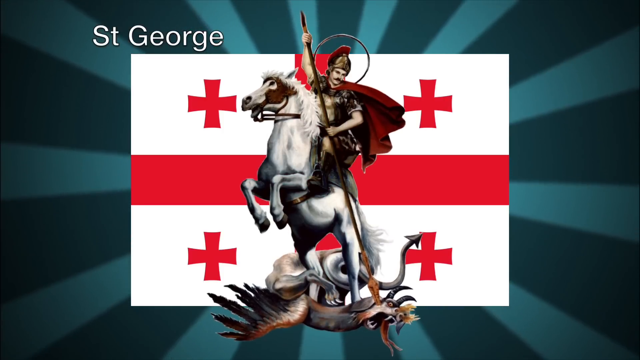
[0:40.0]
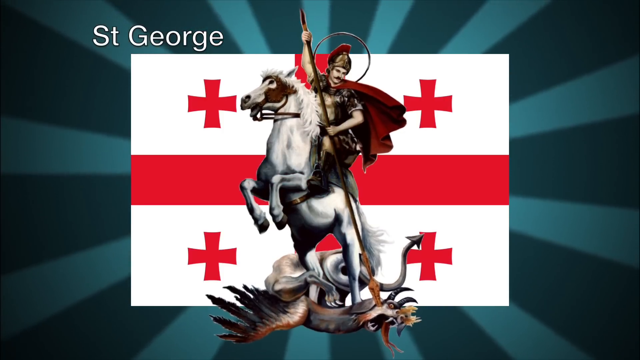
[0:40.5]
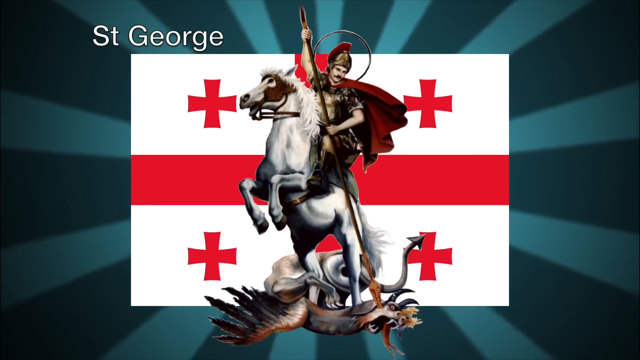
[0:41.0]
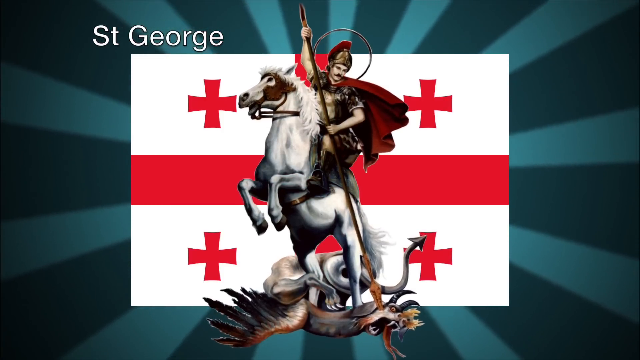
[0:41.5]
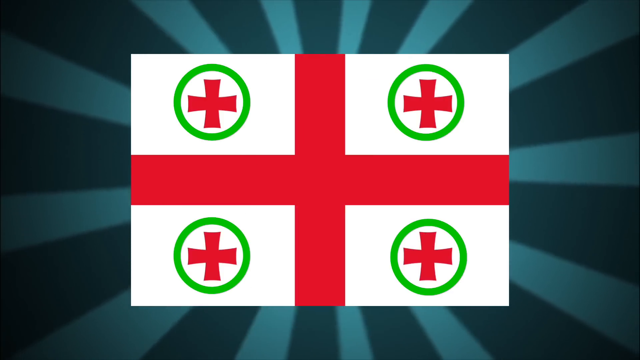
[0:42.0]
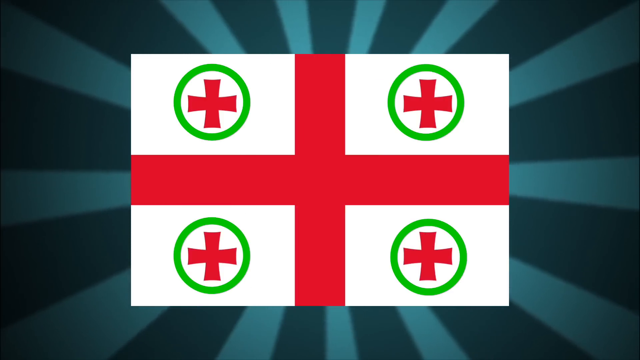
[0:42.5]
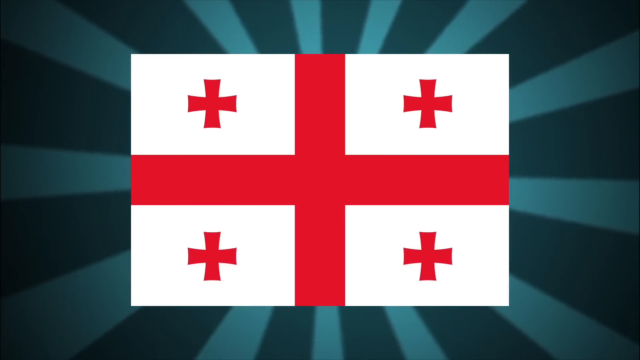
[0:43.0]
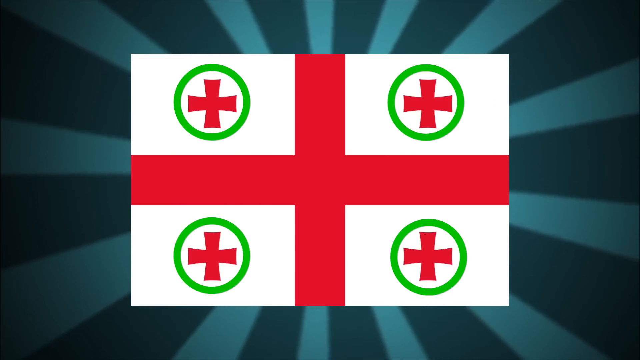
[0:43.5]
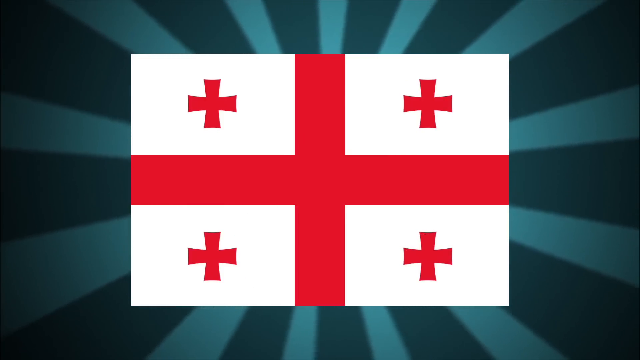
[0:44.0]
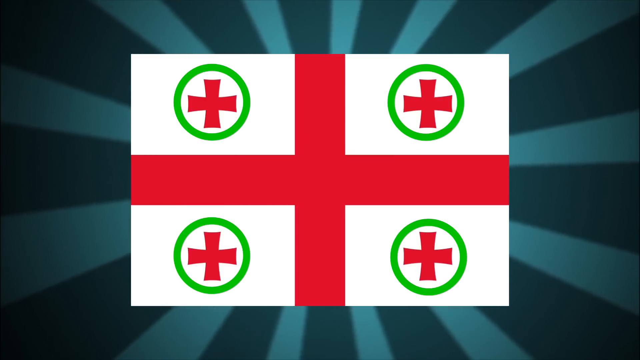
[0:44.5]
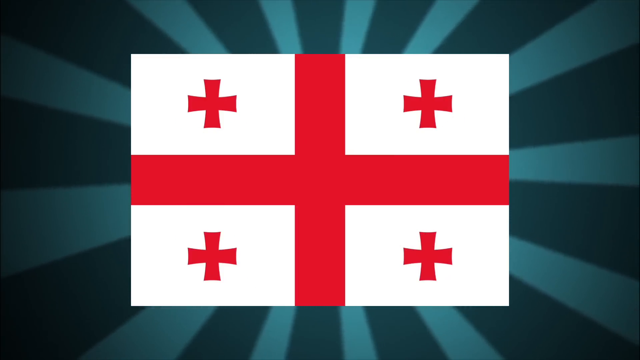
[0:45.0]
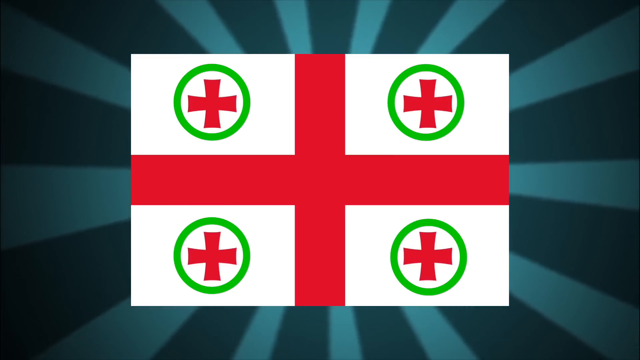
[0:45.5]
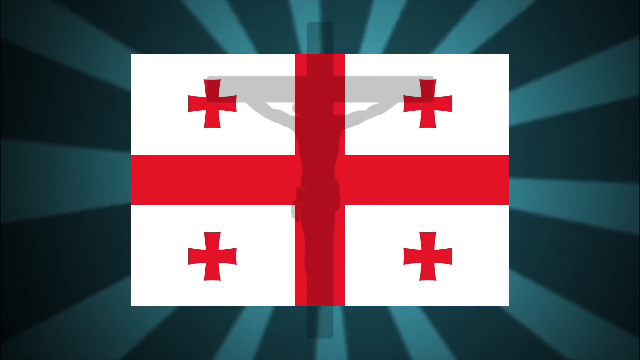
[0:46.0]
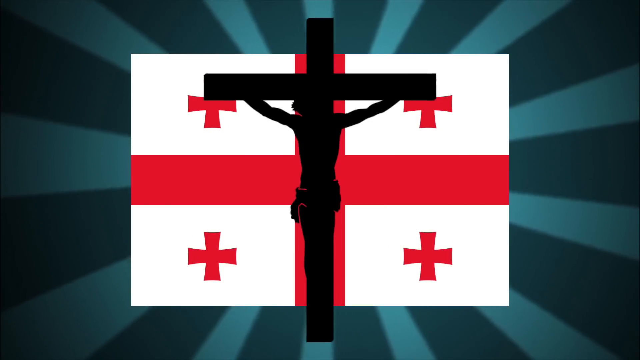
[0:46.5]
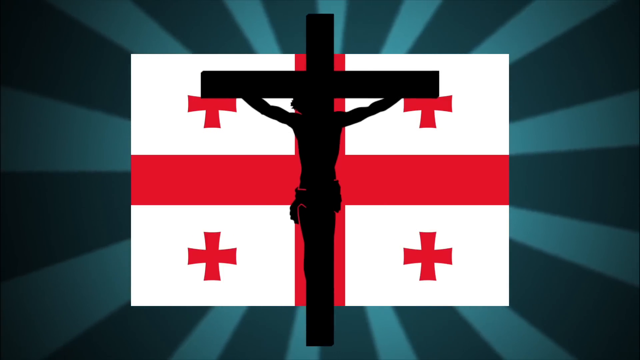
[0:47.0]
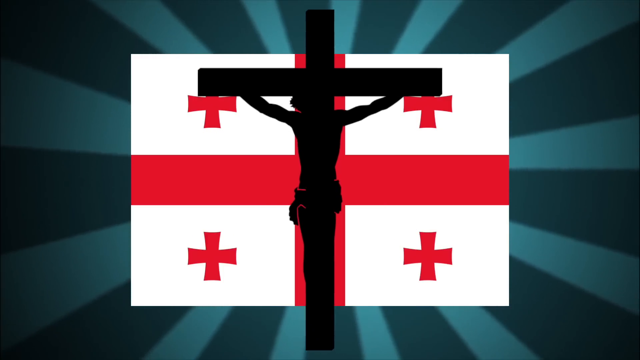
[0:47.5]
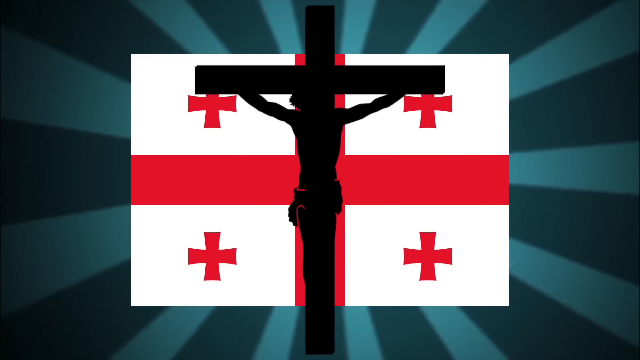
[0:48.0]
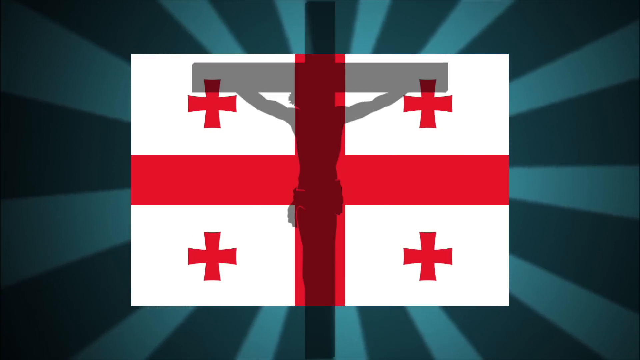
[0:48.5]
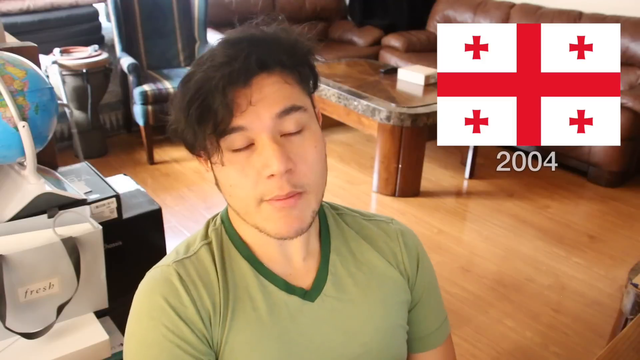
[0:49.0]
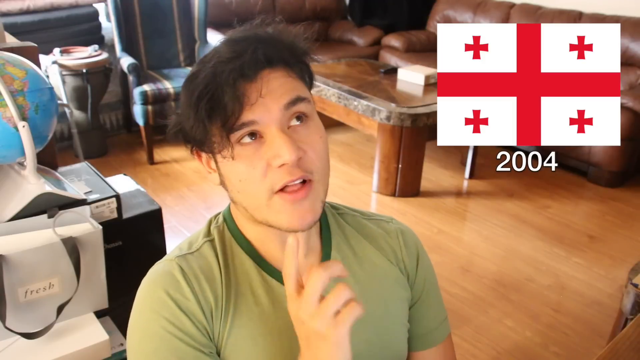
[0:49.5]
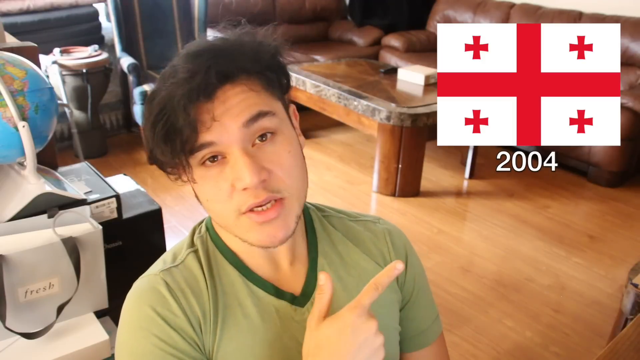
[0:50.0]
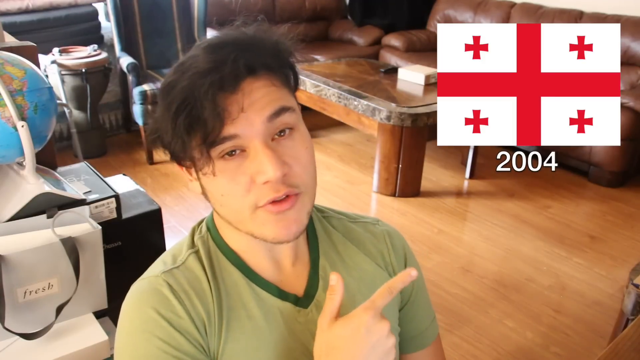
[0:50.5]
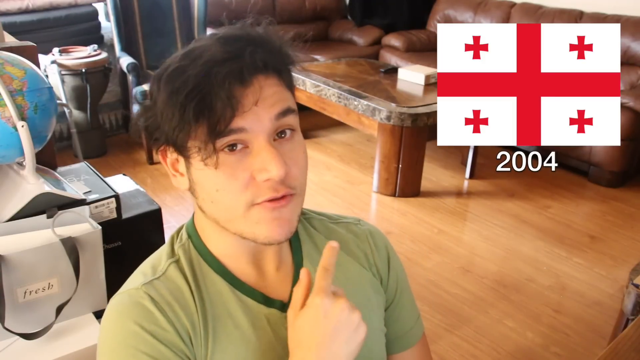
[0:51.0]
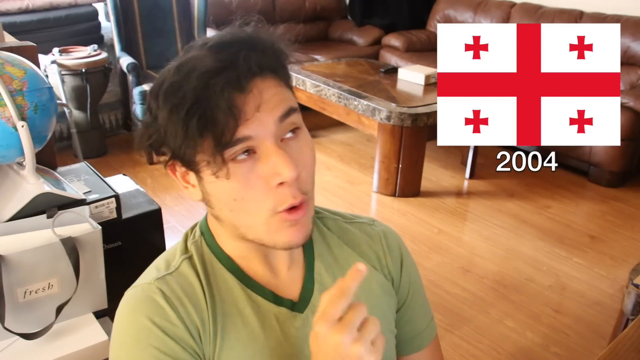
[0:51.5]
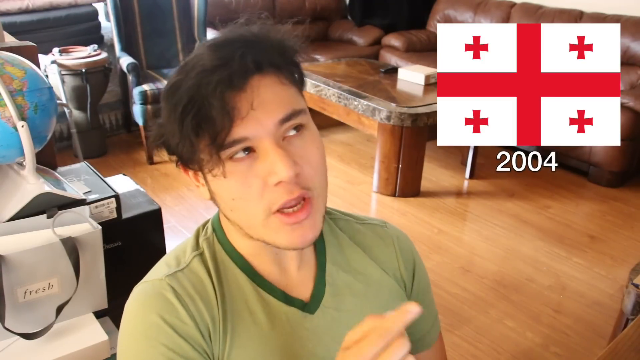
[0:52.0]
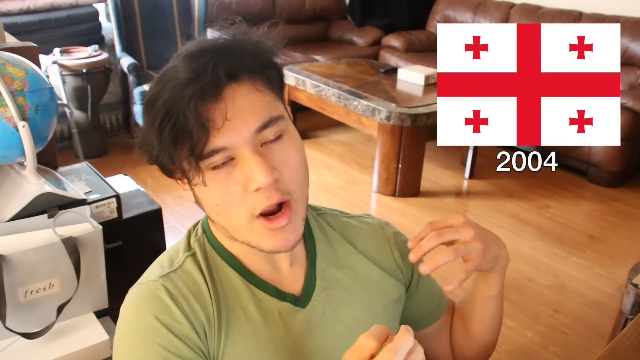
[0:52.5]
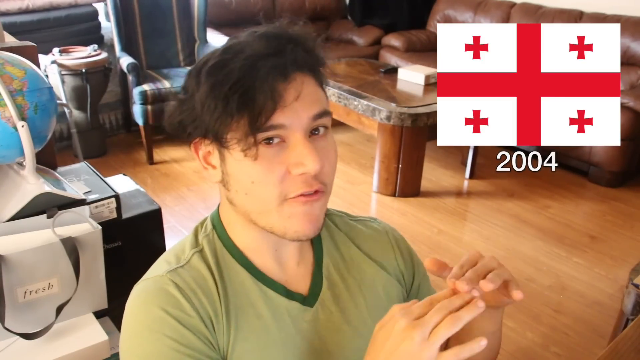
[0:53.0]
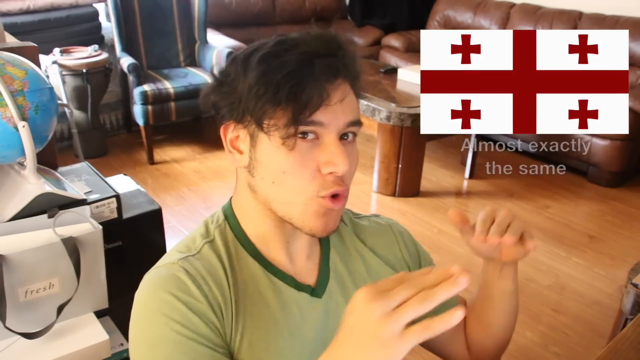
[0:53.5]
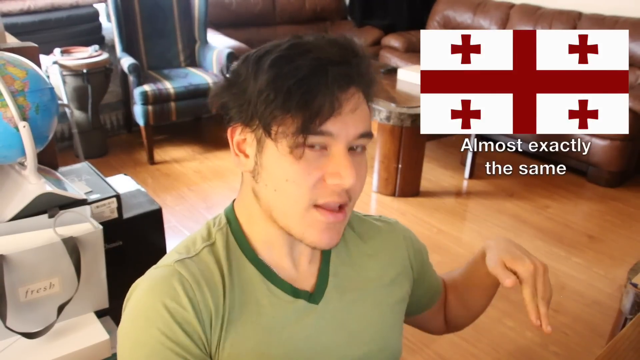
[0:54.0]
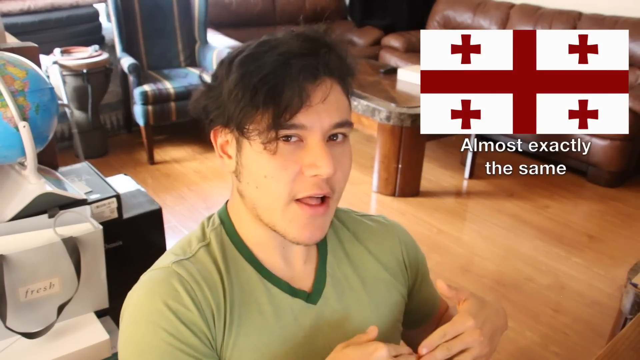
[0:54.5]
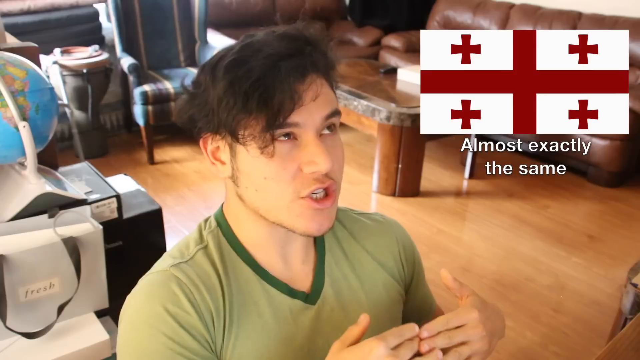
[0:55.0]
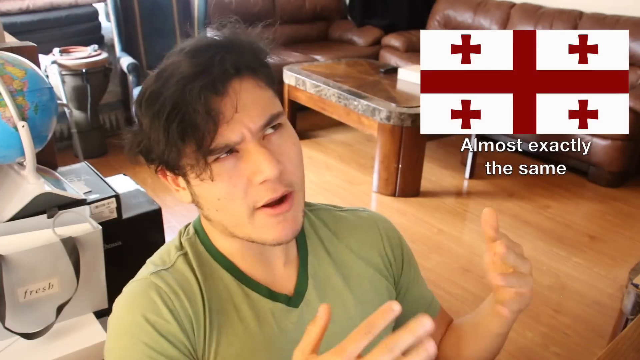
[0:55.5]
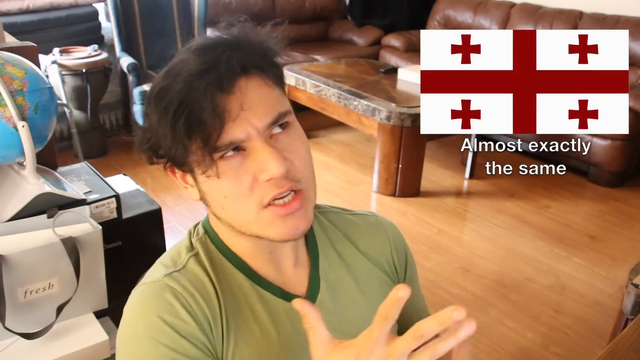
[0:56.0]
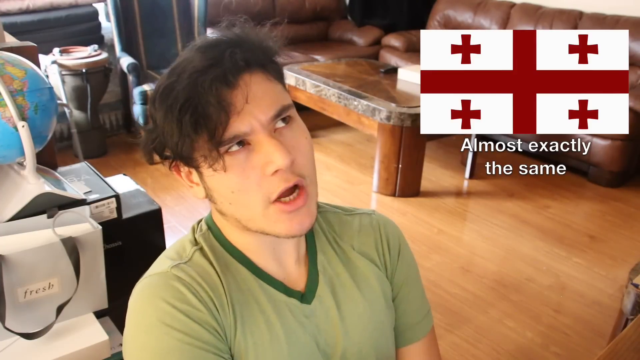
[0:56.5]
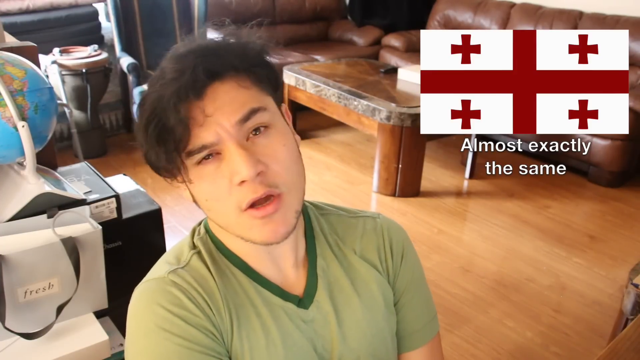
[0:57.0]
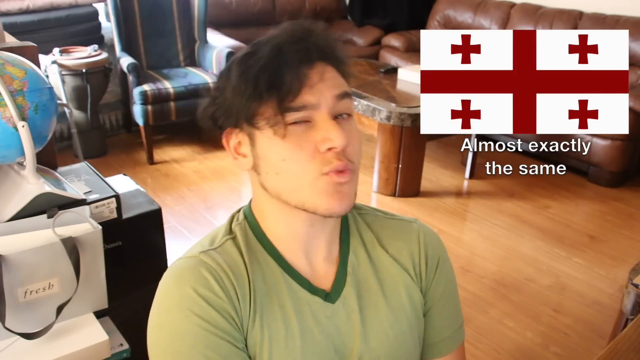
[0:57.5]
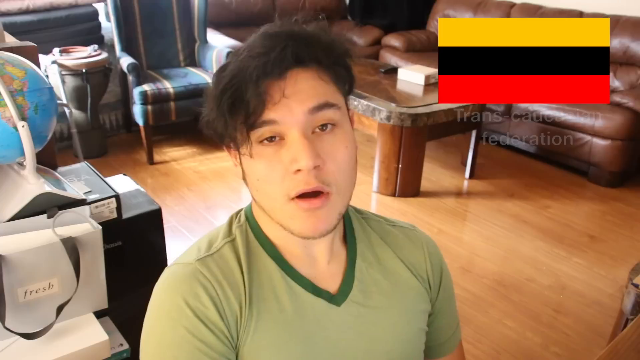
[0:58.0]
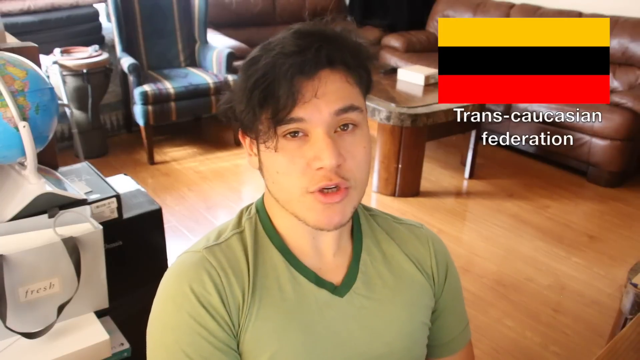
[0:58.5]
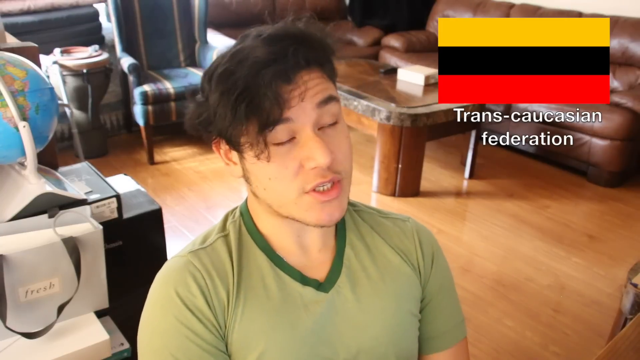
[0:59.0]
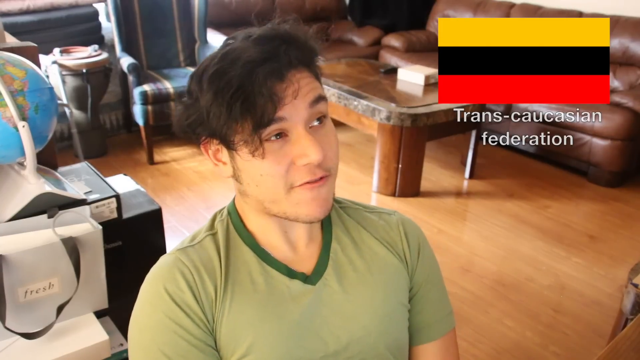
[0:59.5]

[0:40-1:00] The five-cross flag is shown, and in the middle of it is a man riding a horse that has two of its legs raised high. The man appears to be a warrior, and below him there seems to be a dragon that has been killed, apparently with a sword going through it. The scene changes to the flag with its four crosses surrounded by green circles and a black cross in the middle. It returns to the man talking, and at the top right the flag appears with "2004" written below it. The man uses hand gestures as he talks. The flag changes to one whose red is a bit darker, with almost exactly the same writing at the bottom. Another flag, yellow, black and red, then appears with "Trans-Caucasian Federation" at the bottom.